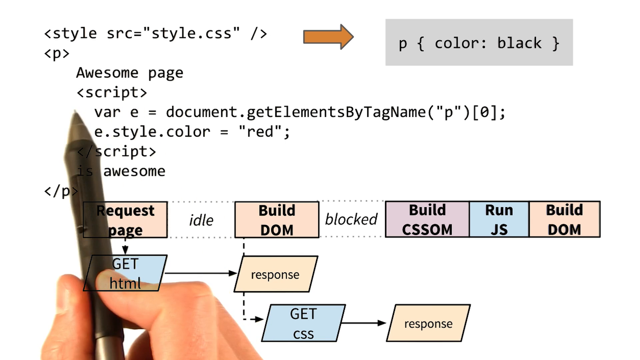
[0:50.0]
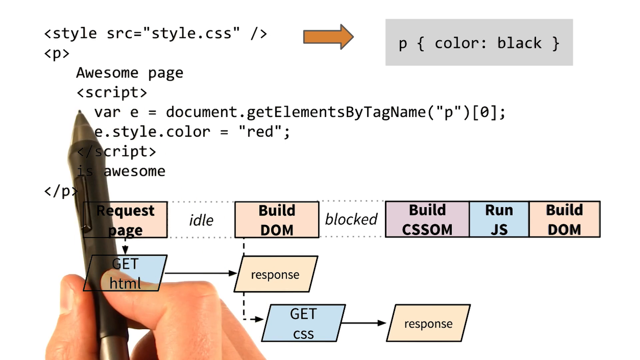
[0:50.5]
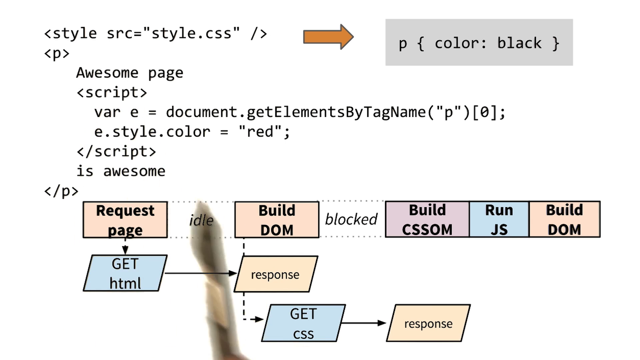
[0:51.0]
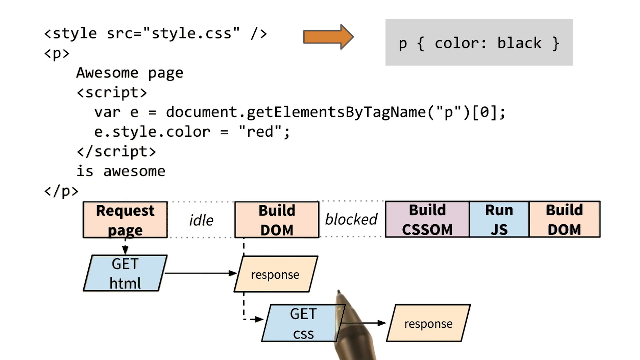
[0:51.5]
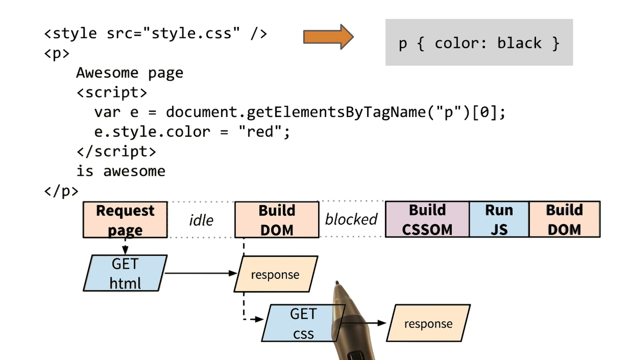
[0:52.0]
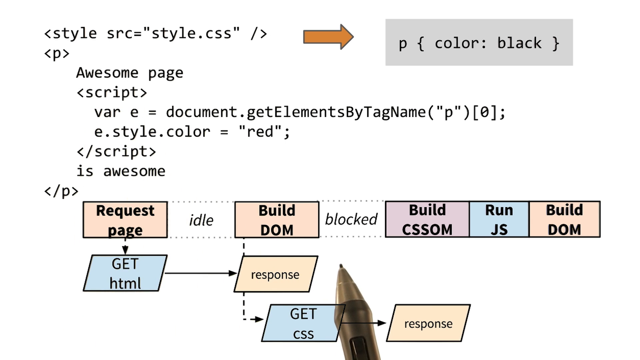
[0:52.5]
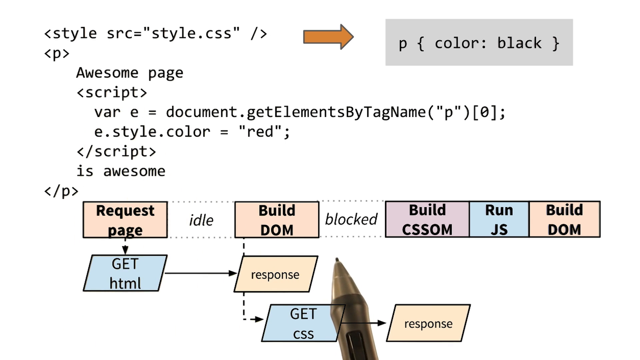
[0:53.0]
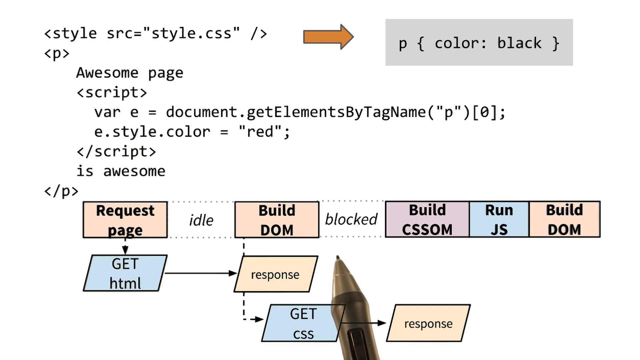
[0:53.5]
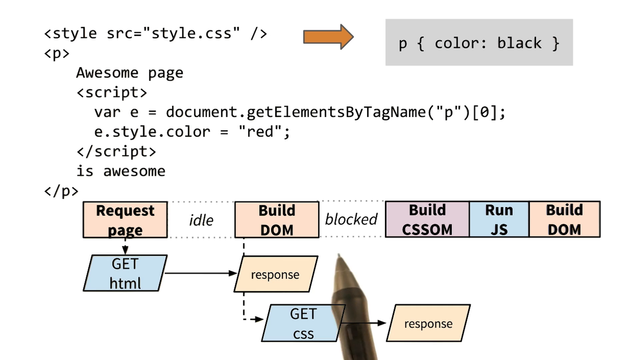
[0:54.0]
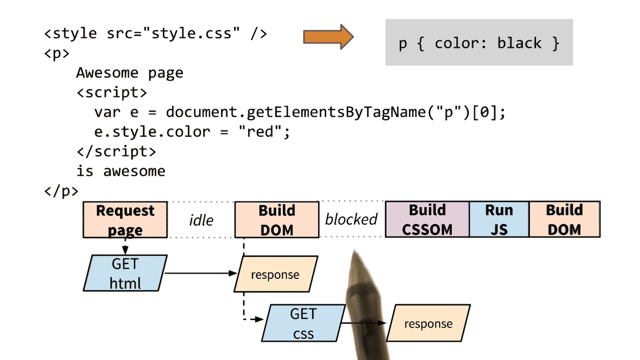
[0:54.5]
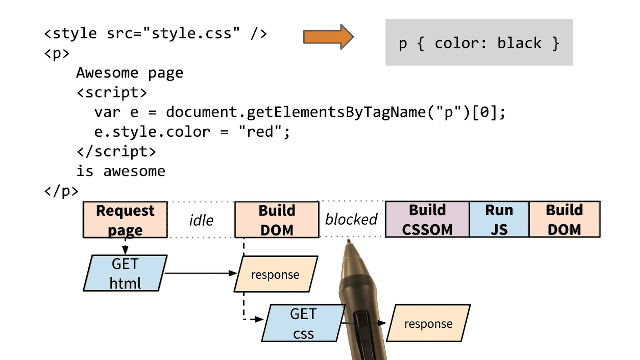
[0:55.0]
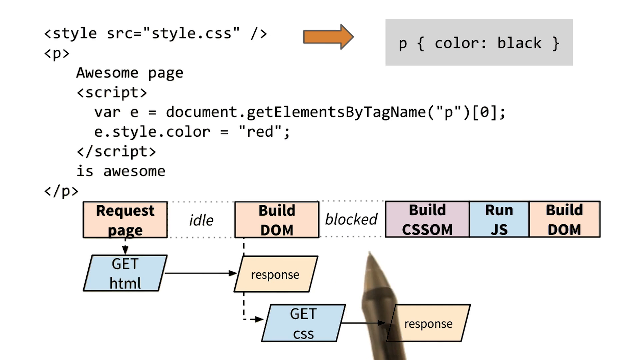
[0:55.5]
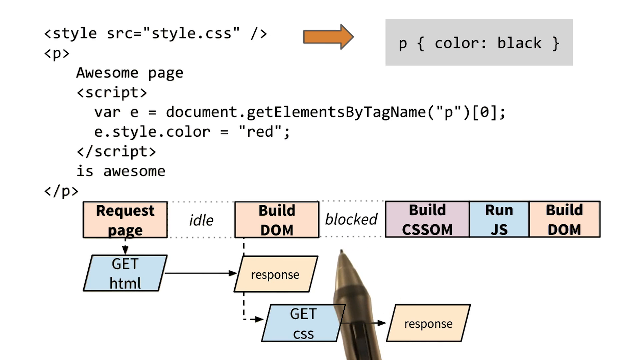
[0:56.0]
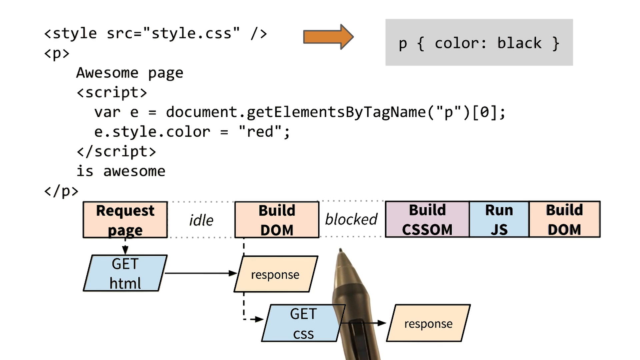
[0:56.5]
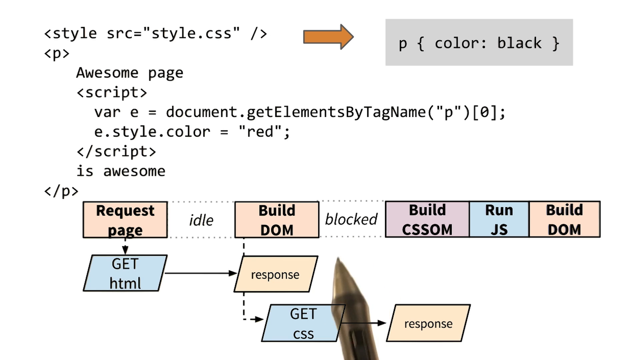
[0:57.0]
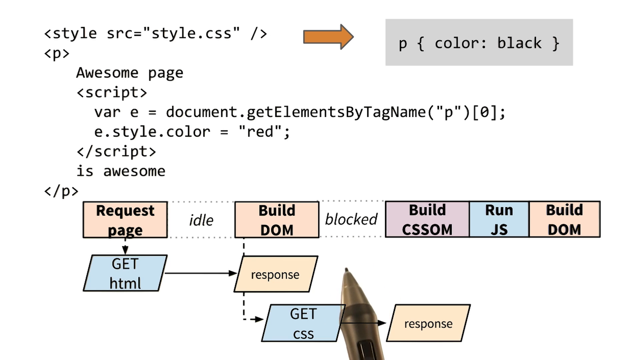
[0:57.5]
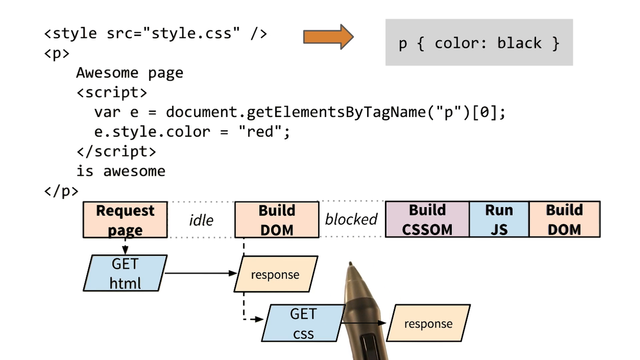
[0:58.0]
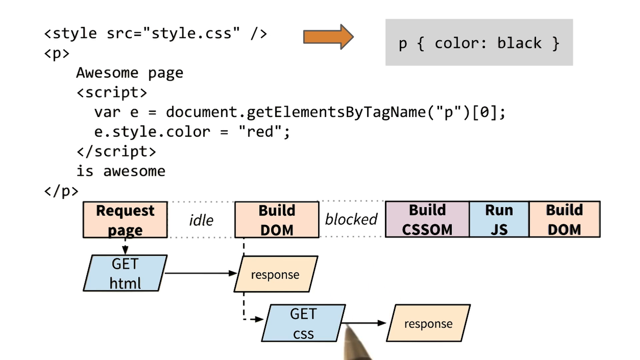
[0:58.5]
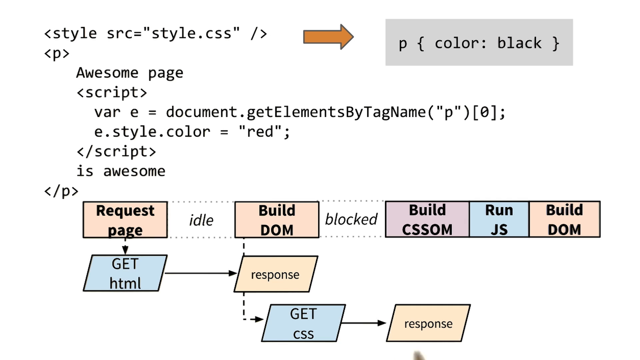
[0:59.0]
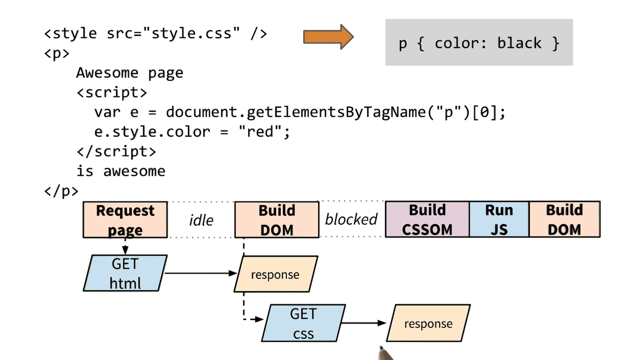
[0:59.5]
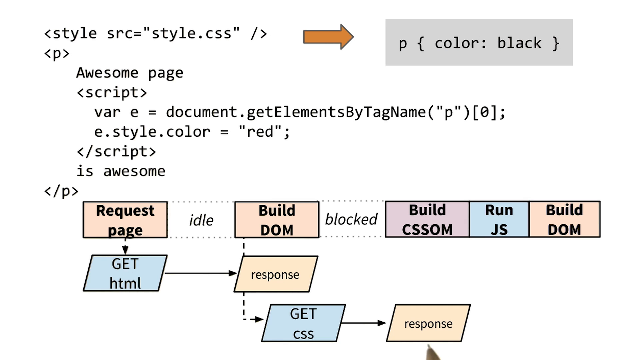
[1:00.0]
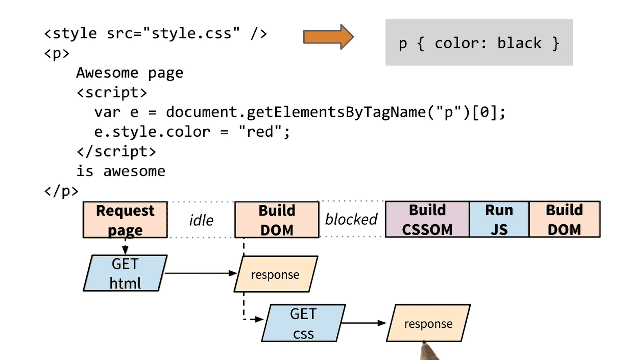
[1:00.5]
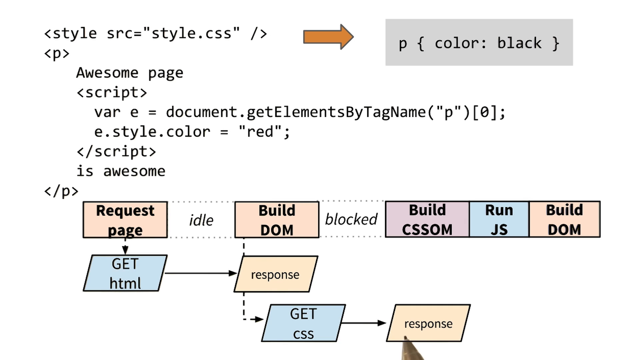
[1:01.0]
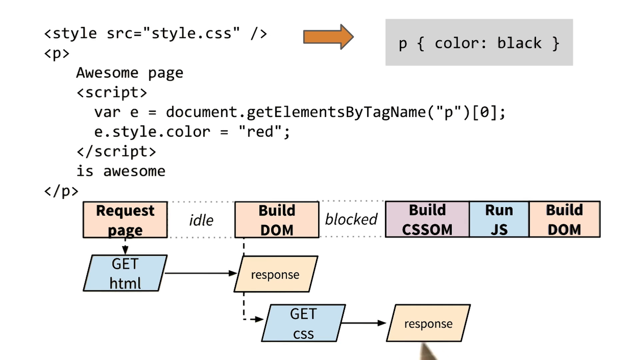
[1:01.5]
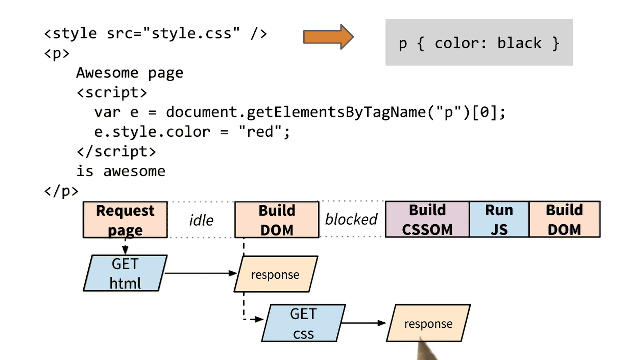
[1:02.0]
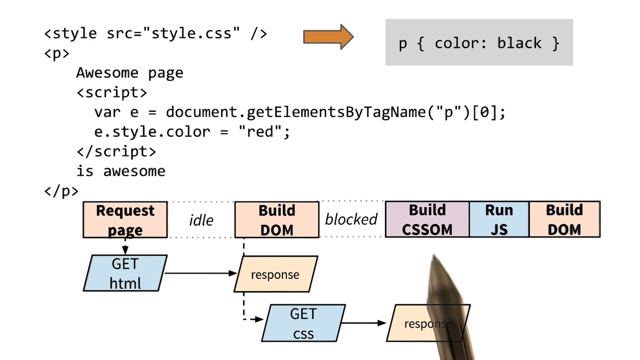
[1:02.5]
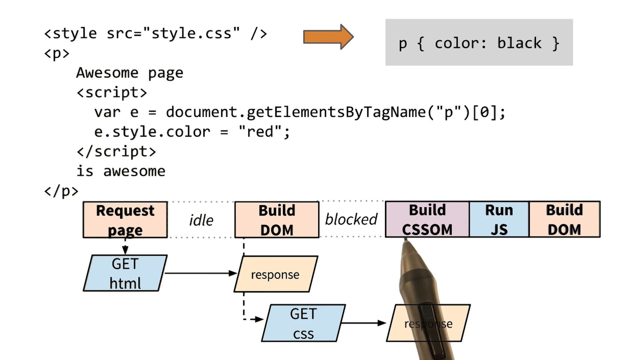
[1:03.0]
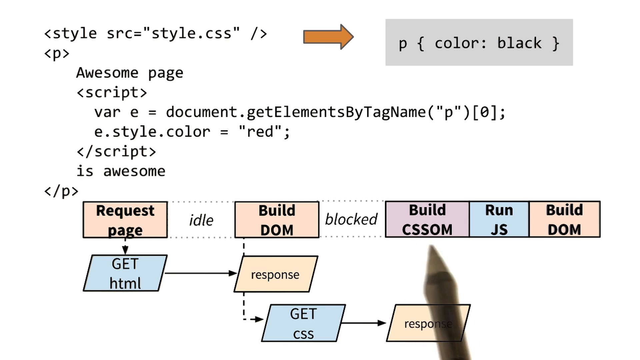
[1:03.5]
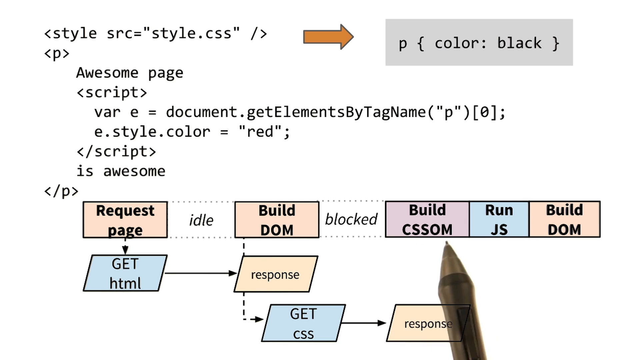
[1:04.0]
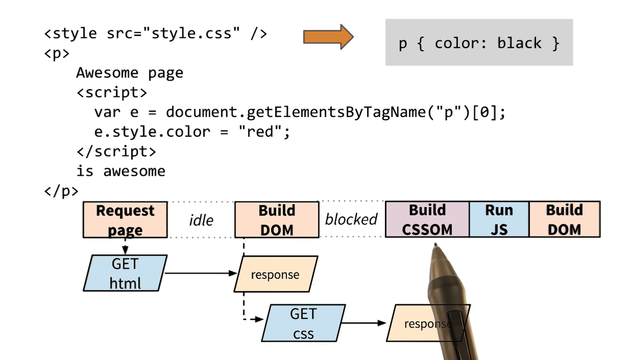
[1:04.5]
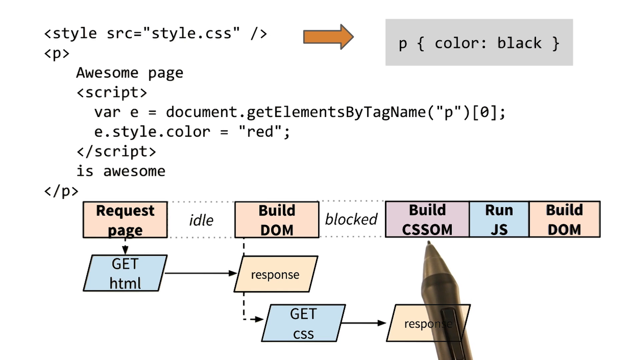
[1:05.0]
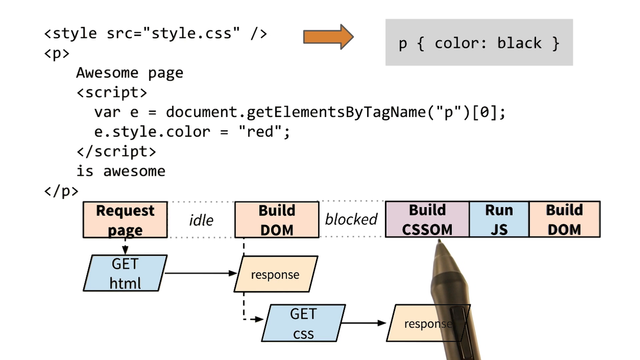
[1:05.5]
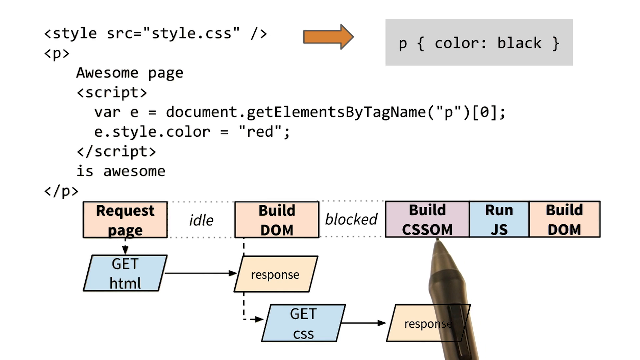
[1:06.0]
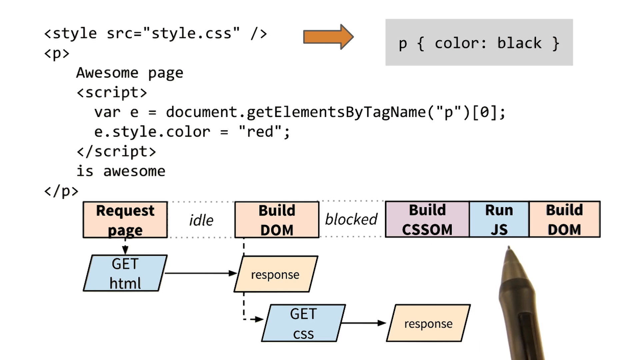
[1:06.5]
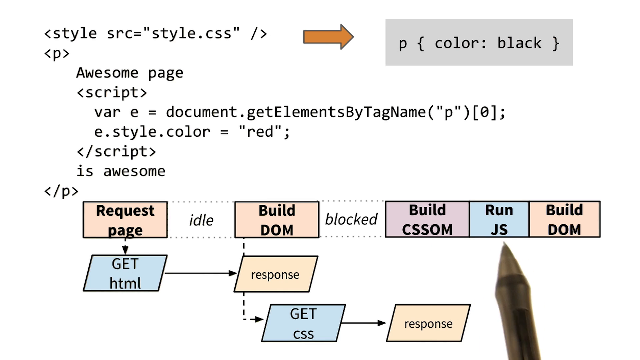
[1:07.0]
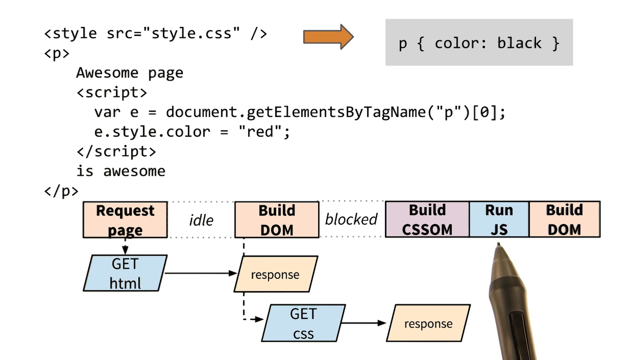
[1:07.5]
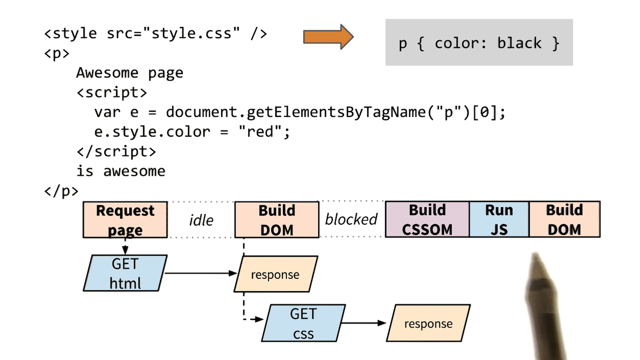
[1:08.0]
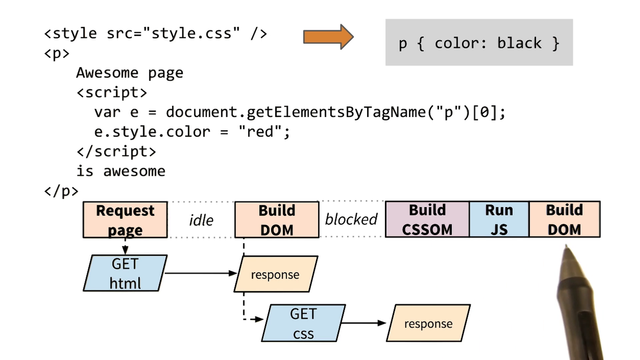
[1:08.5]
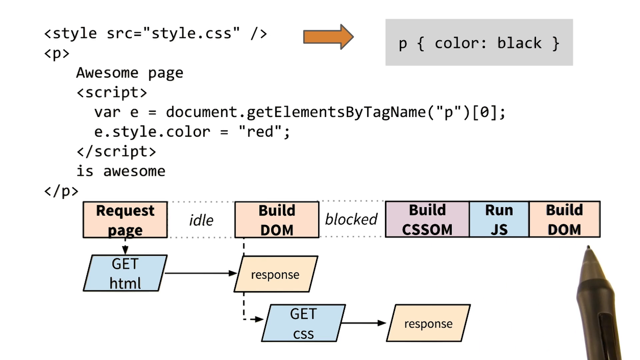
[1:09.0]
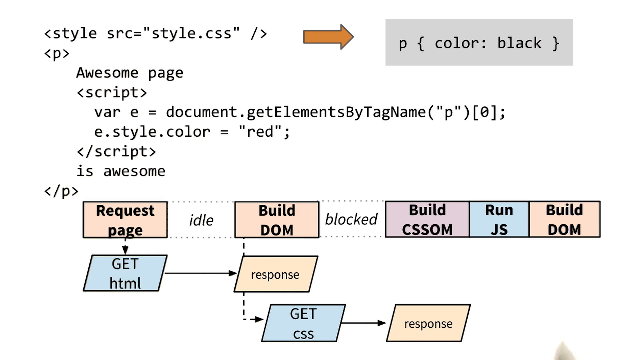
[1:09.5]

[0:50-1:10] On the white background, all of the code is still written down, along with the map: it starts with request page, goes into GET html, then into response, which either goes to GET css that ends up in response, or has a dotted line to build DOM, which is blocked at the right side next to a three-part block made up of build CSSOM, run JS and build DOM. The man points at the blocked part of the map, specifically at build CSSOM, run JS and build DOM, probably explaining what they are, and goes through each part slowly.